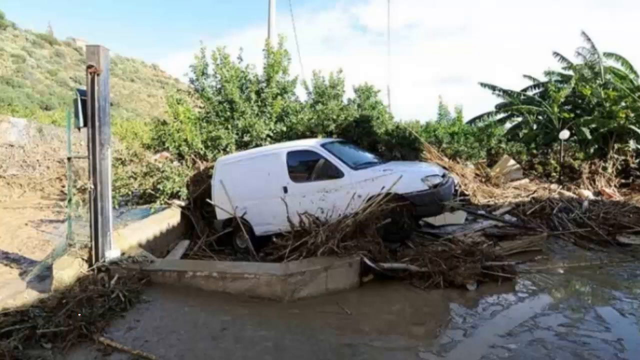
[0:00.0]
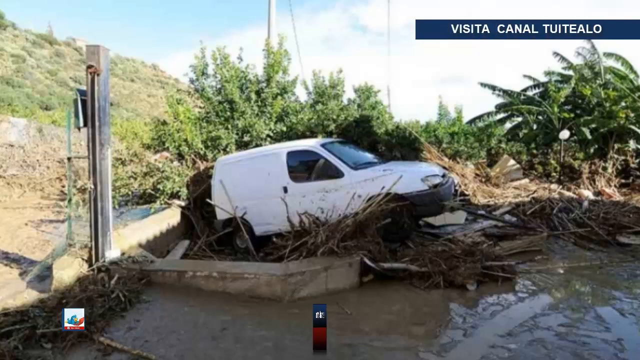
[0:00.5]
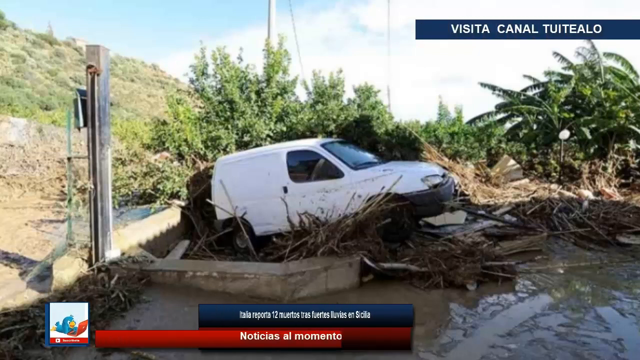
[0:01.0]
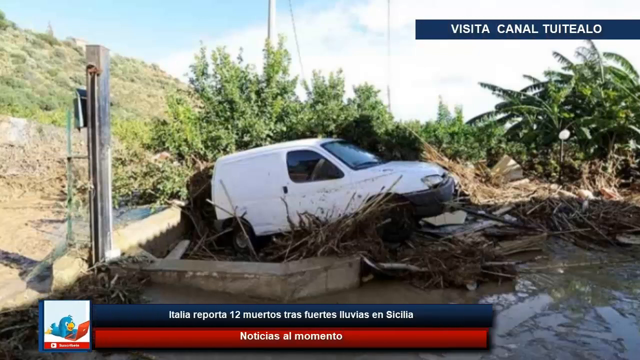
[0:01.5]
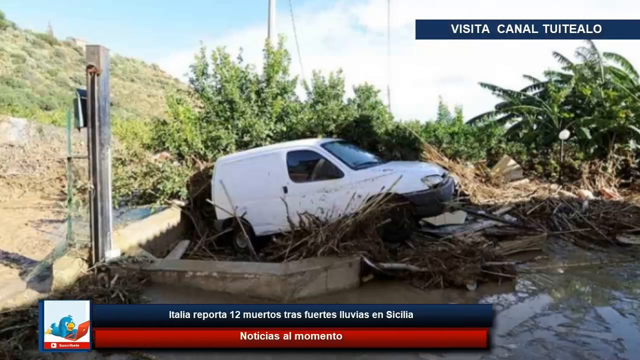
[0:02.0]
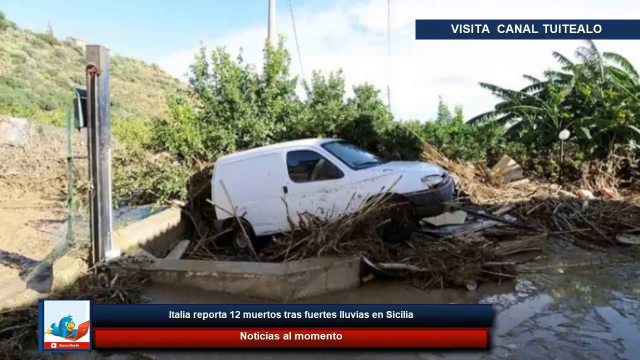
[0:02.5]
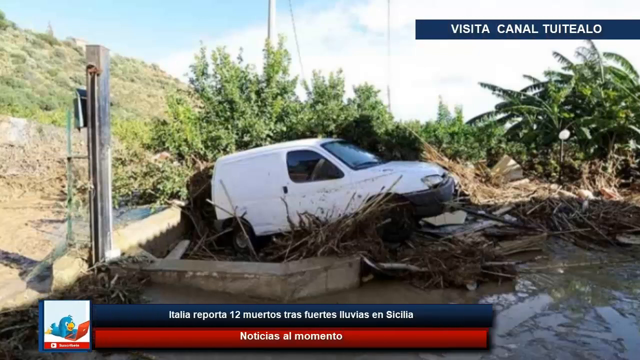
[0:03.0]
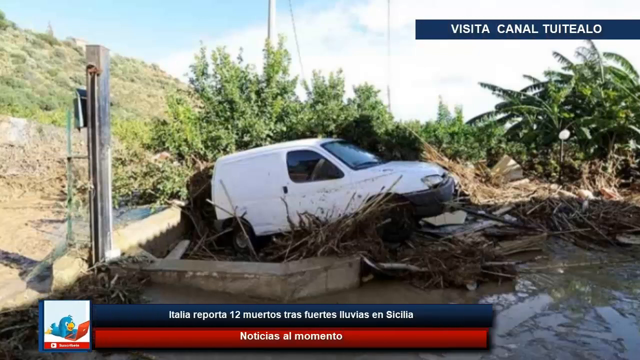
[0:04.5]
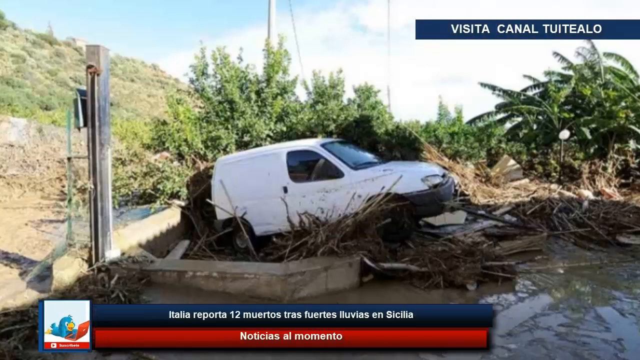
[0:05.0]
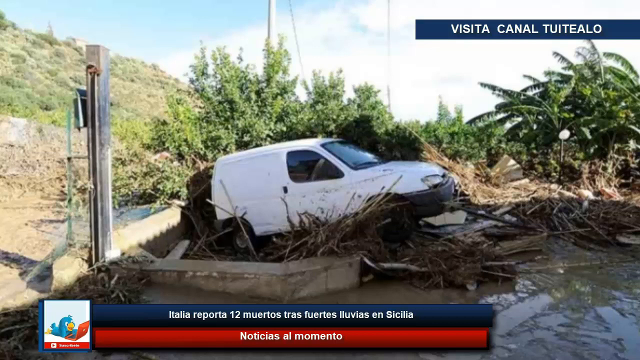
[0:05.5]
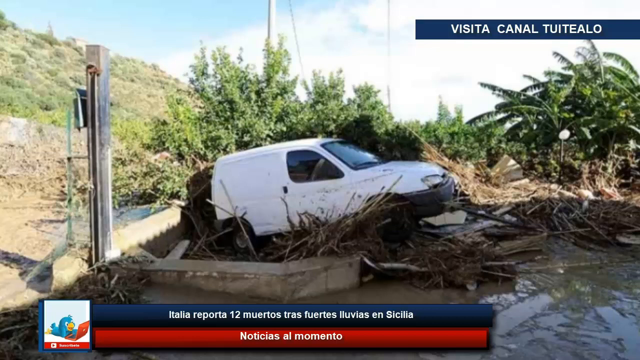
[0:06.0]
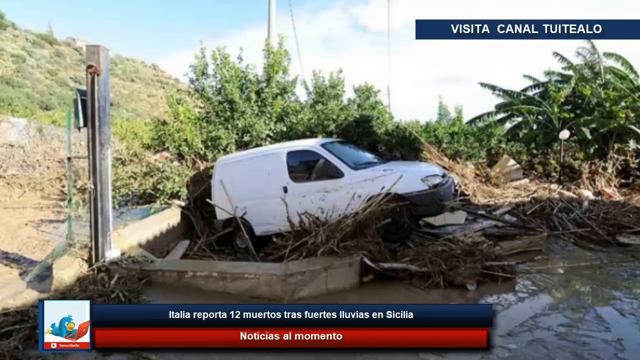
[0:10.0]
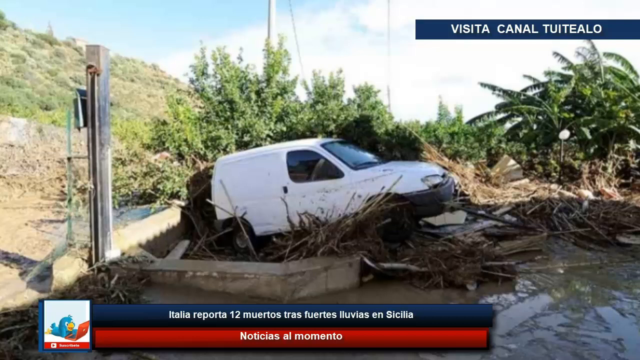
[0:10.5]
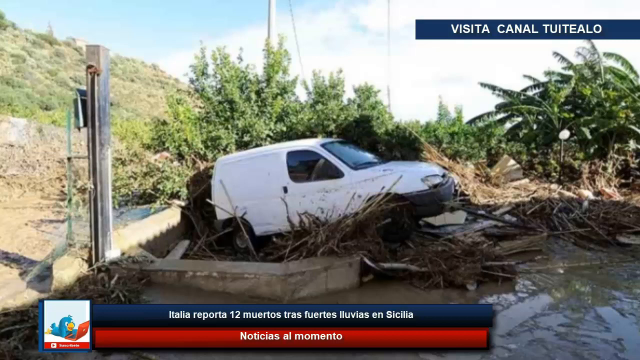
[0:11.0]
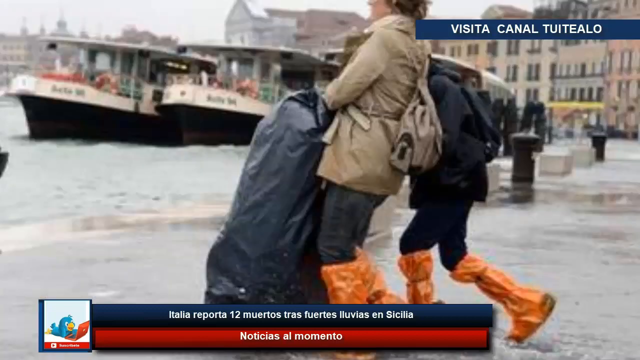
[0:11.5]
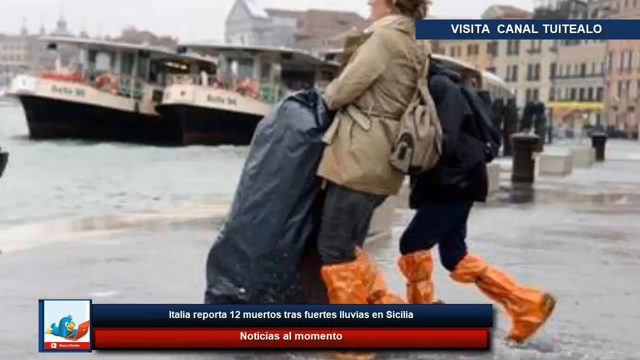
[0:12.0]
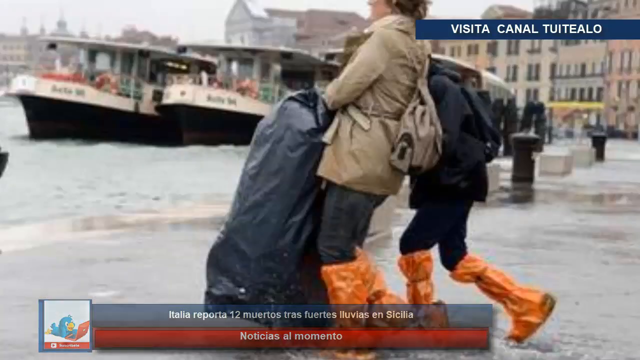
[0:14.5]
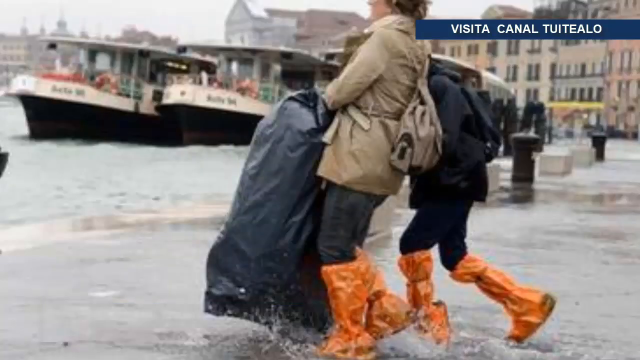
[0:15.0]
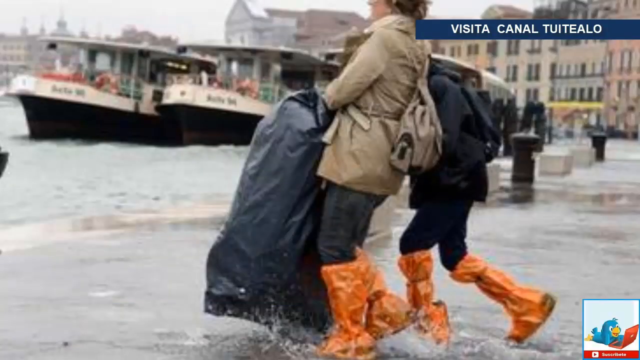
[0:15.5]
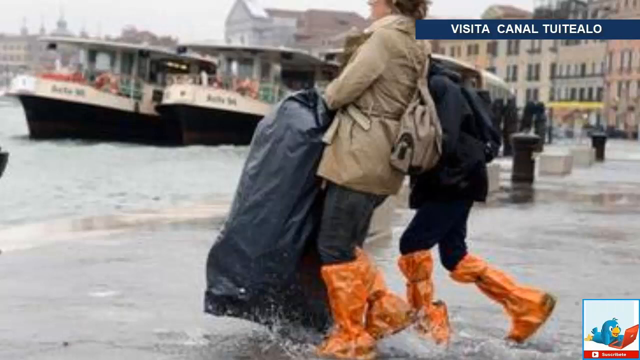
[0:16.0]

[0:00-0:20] A news segment, apparently an Italian news report, shows a white van in the background, put there by the floodwaters visible around it. Even though the sun is shining, the area is still flooded. The van is stuck up against a wall, with brush and sticks piled up underneath it from the floodwaters. The sky is sunny, there are bushes around the scene where the van is stuck on the wall, and there is a hill over to the left. The next scene shows a woman and what looks like a child walking along a flooded dock area beside a canal. They wear orange leggings, pieces of plastic that keep their feet and ankles from getting wet as they walk through the flooding. The woman carries something covered with a black tarp and wears a tan coat, while the person next to her wears a dark black coat. Two boats are in the canal over to the left, and the floodwaters are flowing over the canal onto the dock area where the two people are walking. A city is visible in the back.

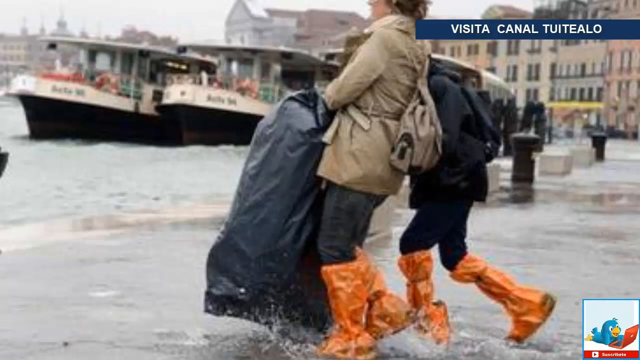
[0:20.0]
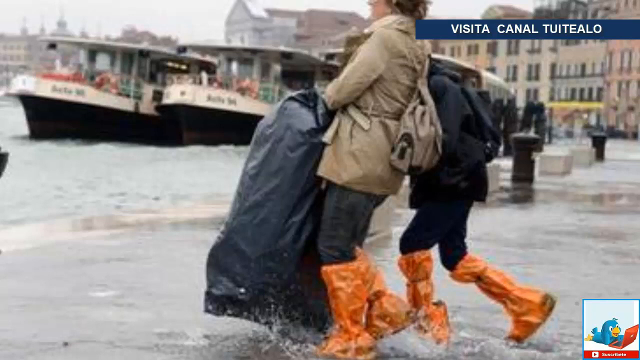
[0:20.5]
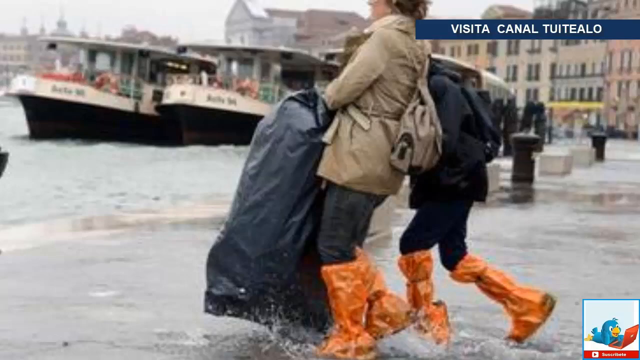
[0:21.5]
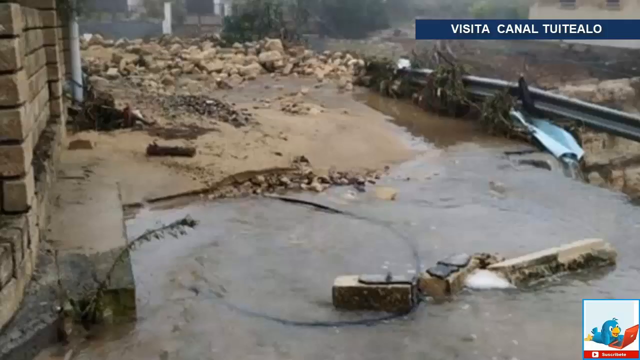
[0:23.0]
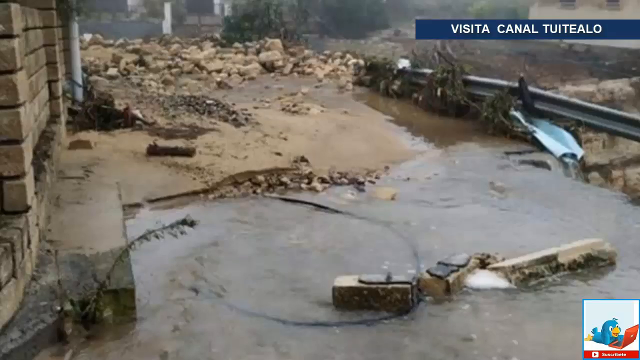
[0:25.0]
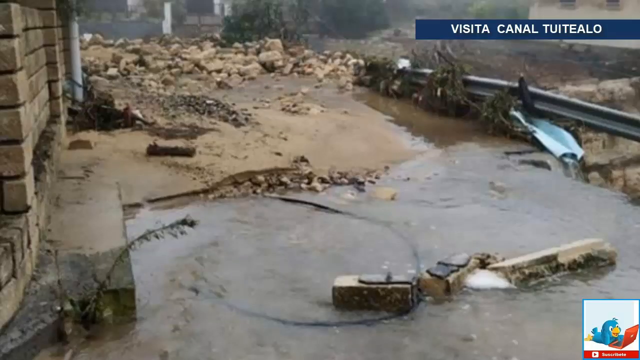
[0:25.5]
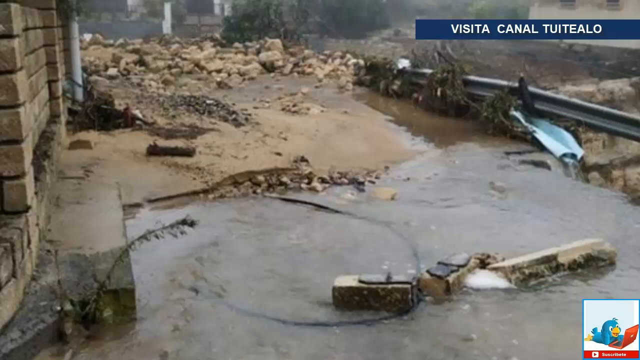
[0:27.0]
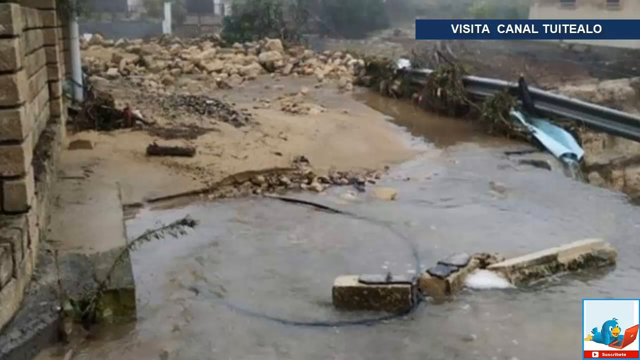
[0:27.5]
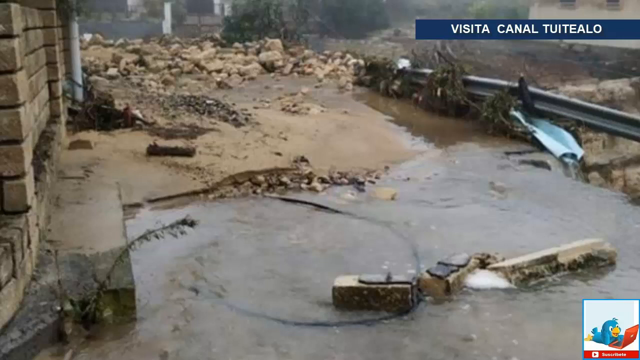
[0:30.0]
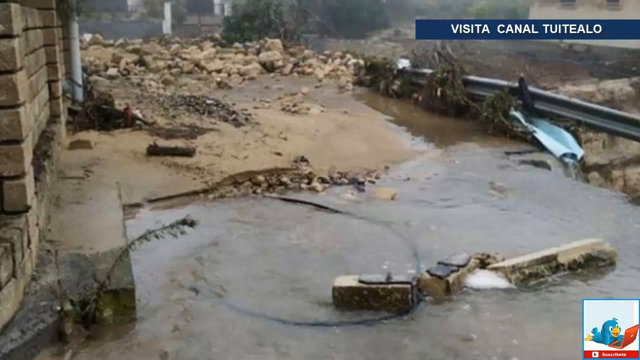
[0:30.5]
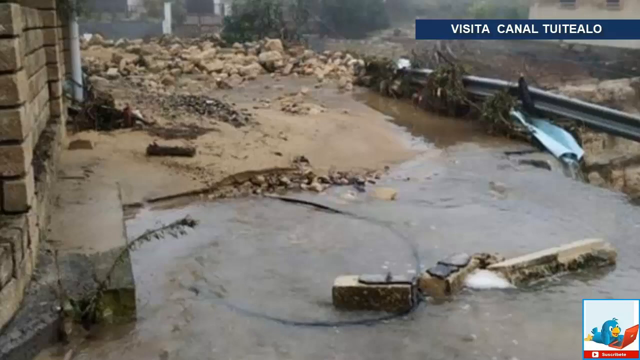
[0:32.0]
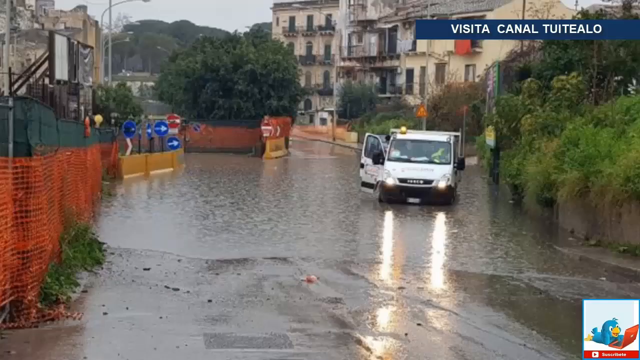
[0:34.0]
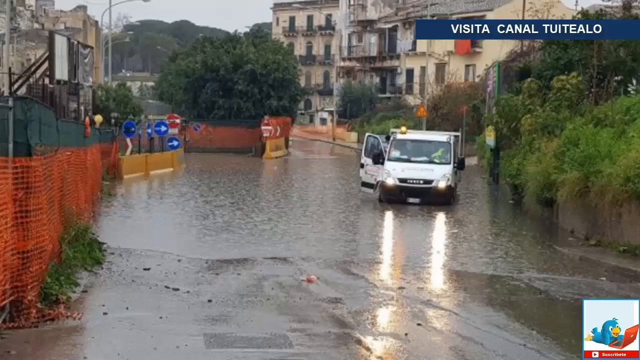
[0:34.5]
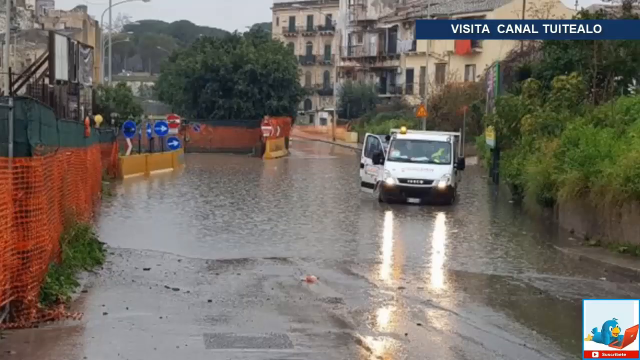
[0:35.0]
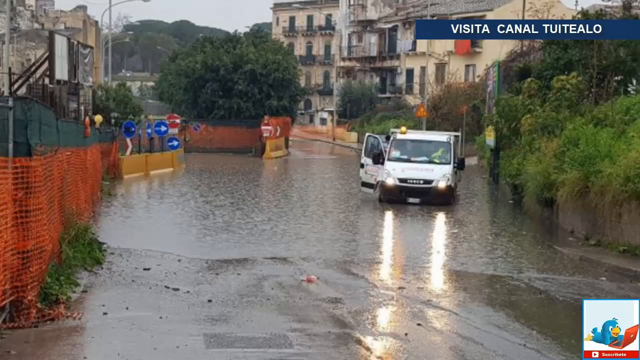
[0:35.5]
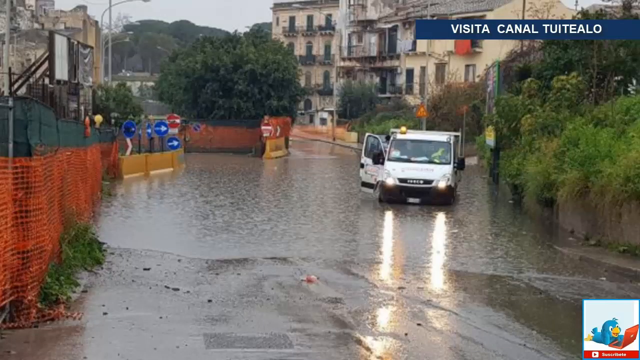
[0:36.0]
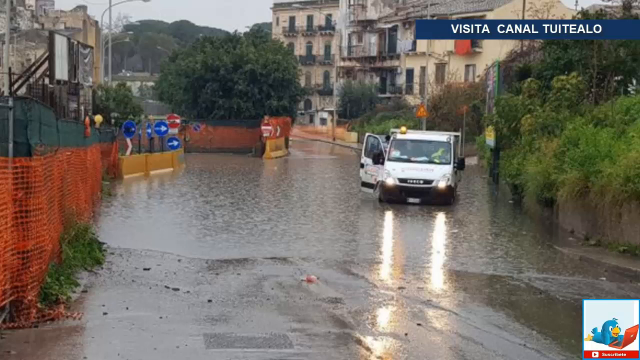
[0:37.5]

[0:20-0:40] Two people walk on a dock. Over to the left is a canal with two boats parked in it, and water from the canal is flooding up onto the boardwalk or dock area where they walk. Both have plastic boots covering their shoes and lower legs to keep them from getting wet. The woman wears a light-colored coat, the person to her right wears a black coat, and the woman carries something covered with a black trash bag. Next, a flooded-out roadway appears. On the right, floodwater runs off the side of a cliff area that has a railing. The middle of the road looks like a little bridge area. Large chunks of concrete lie in the water, and large boulders are in the distance. Then a white van is parked in the middle of a flooded road. One of its doors is open, and it has a little yellow light on top at the upper left front, above the windshield. Its headlights are on and shine on the floodwater. On the left is an orange fence, and at the end of the fence are several blue road signs and a couple of red road signs. Several bushes and trees line either side of the road, and there is a concrete wall on the right side of the road where the water has flooded out the road.